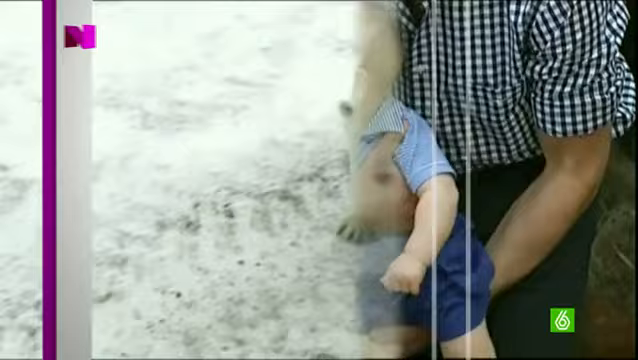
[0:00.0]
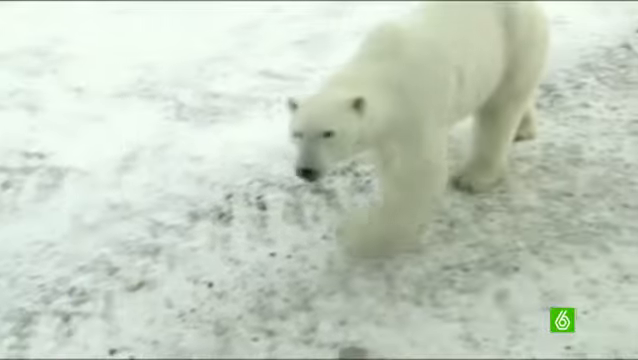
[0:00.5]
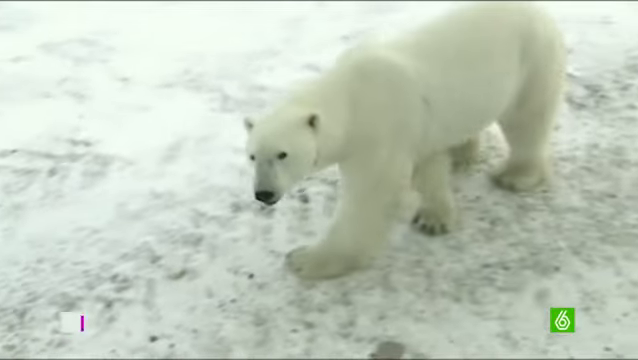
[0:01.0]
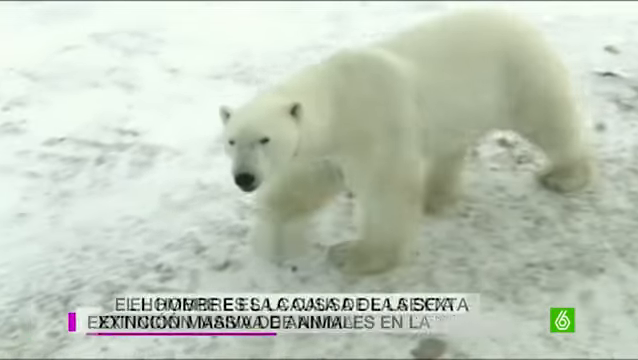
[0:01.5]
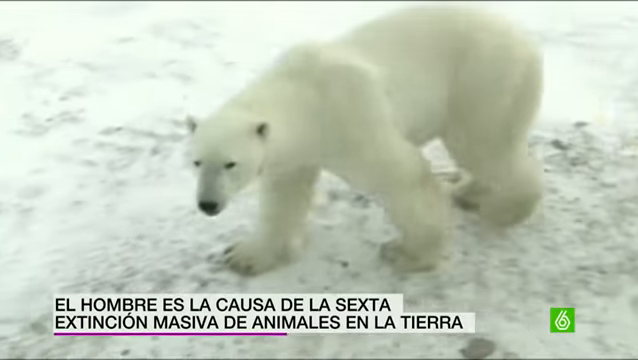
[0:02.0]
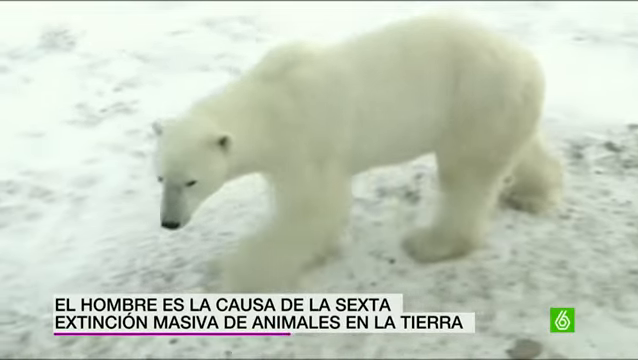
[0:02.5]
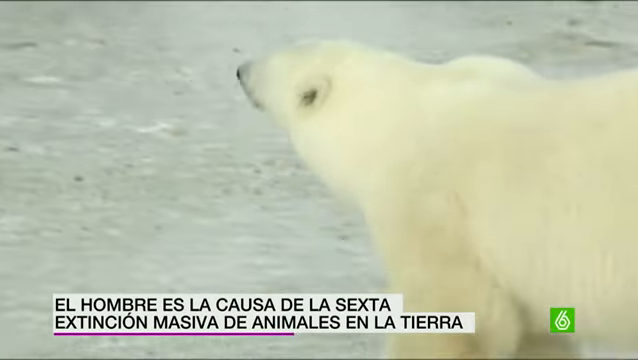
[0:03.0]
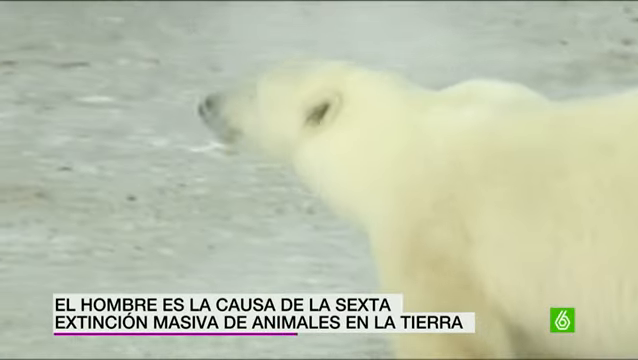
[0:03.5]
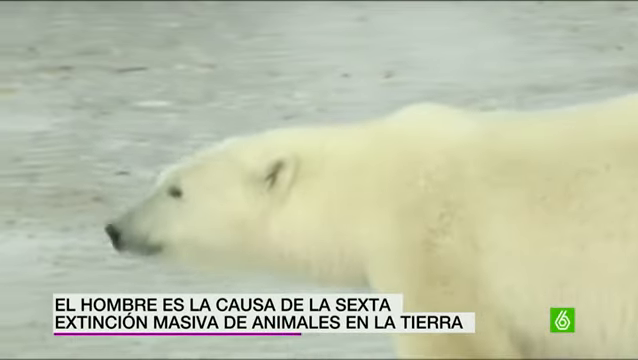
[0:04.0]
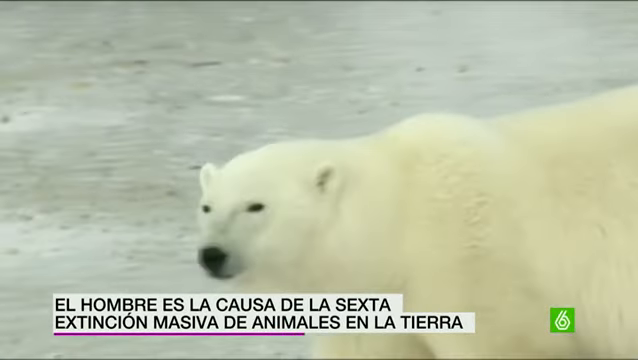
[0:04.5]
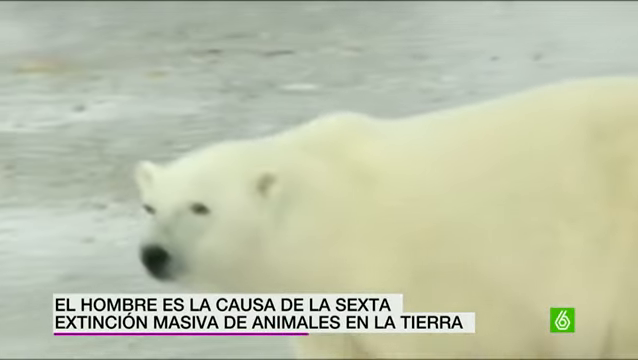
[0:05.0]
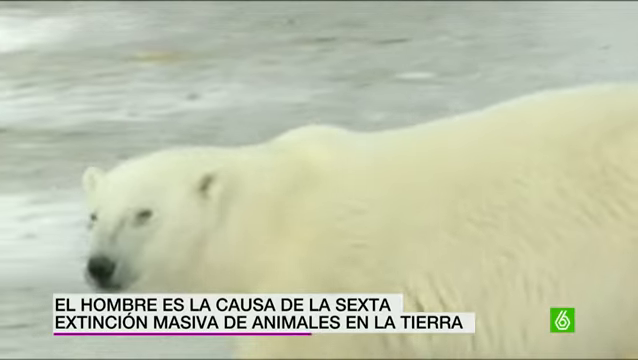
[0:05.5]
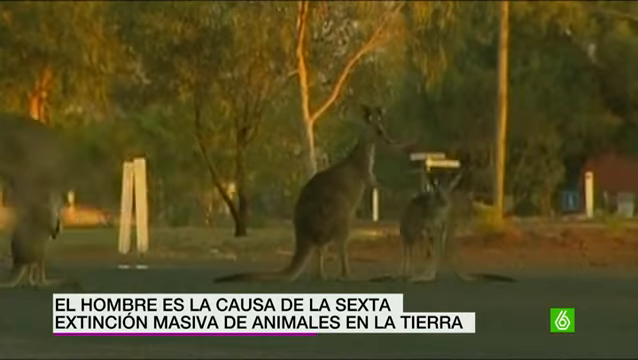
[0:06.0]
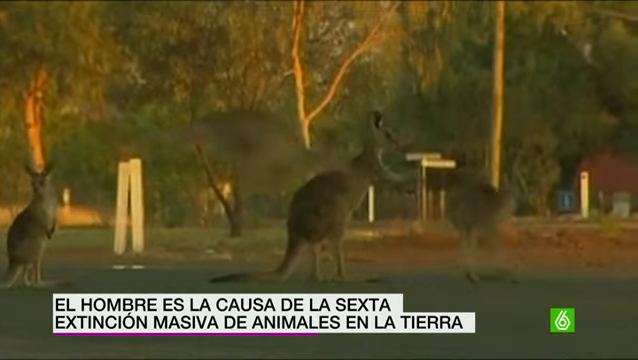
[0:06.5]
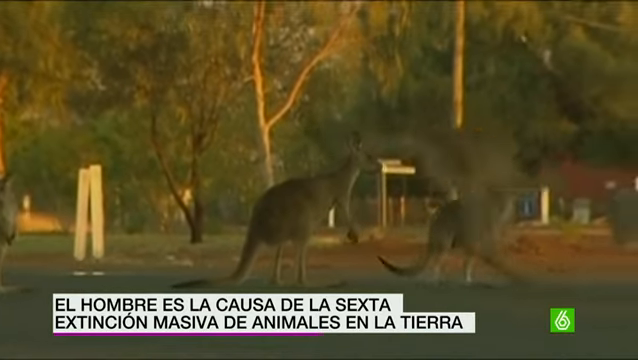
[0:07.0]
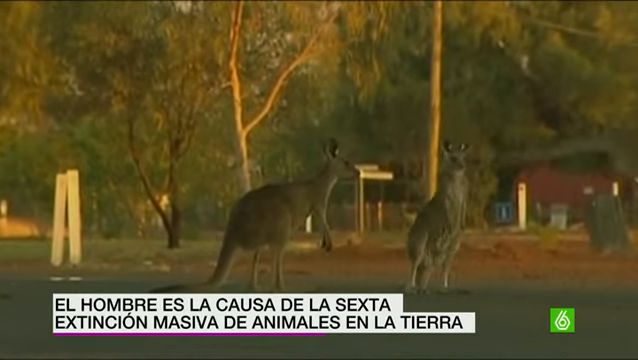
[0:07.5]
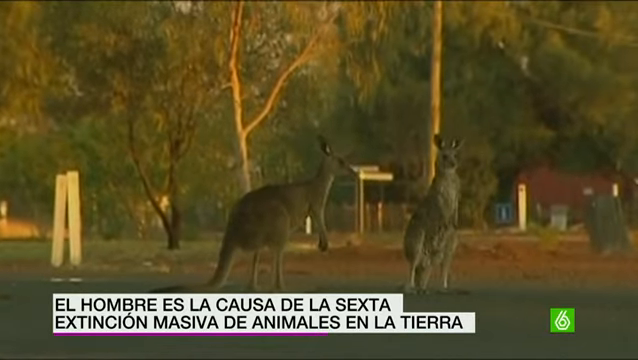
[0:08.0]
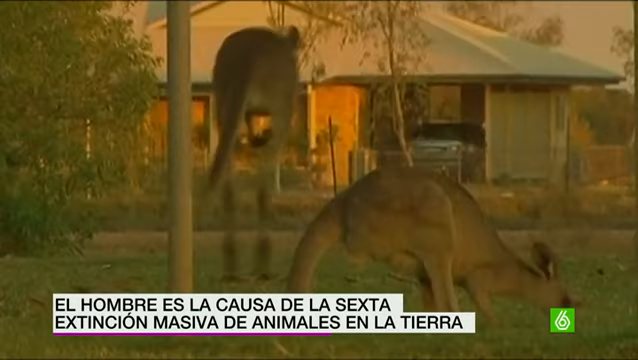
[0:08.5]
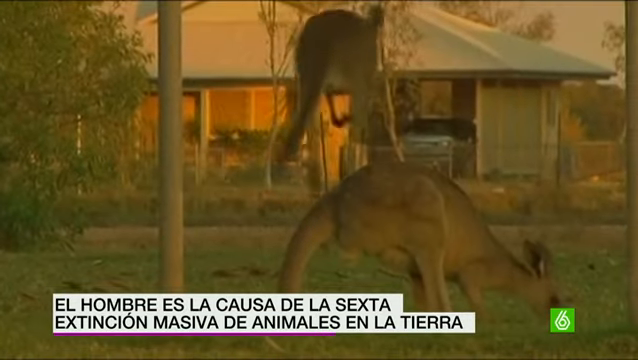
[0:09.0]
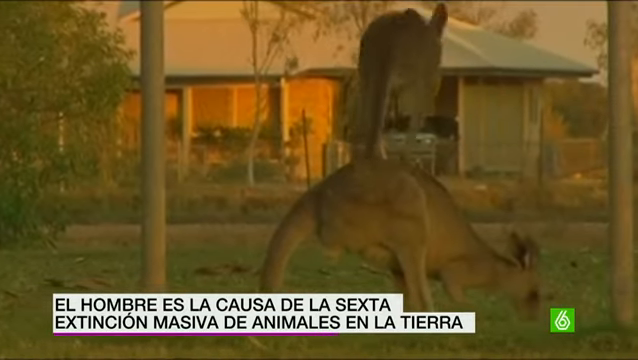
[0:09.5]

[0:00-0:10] There is a lot of snow, and it looks like it has been snowing. A polar bear walks in the snow, sniffing or looking around as if it is looking for something. The video then shows a place with a lot of trees that is not a forest, where there appear to be houses and a lot of kangaroos. There is also a household at the far end, which has a garage with a car inside.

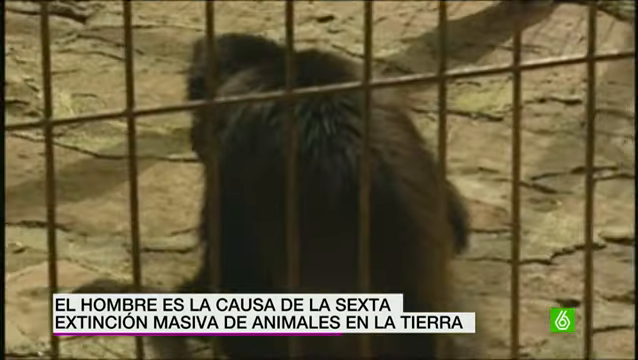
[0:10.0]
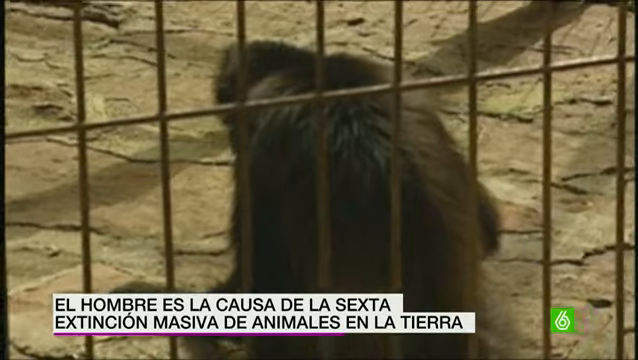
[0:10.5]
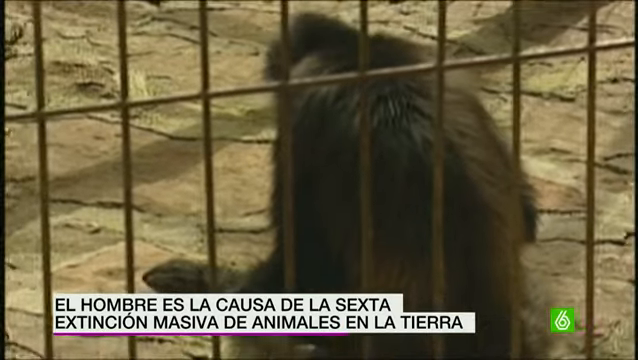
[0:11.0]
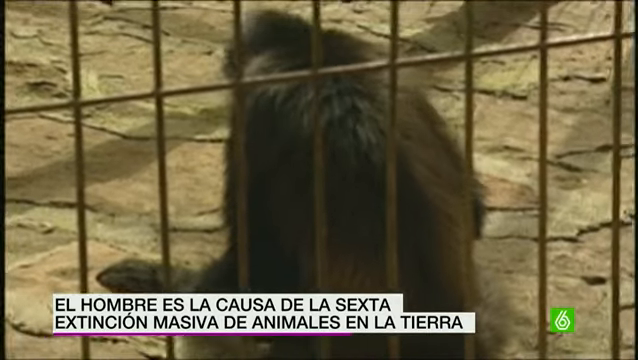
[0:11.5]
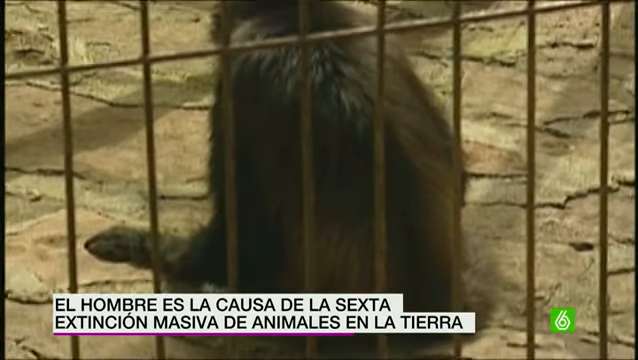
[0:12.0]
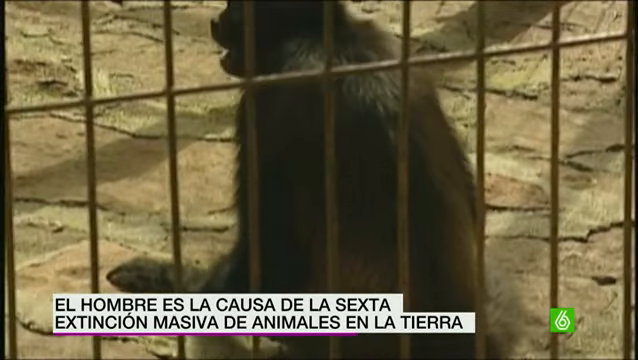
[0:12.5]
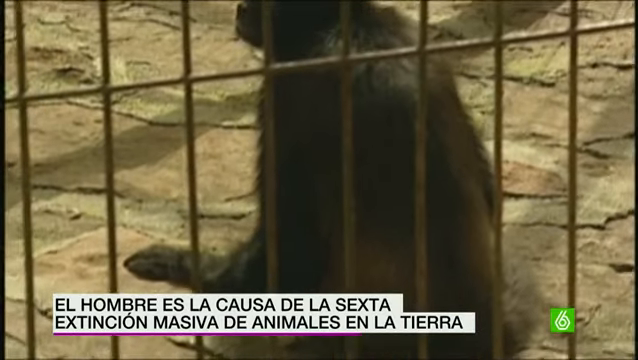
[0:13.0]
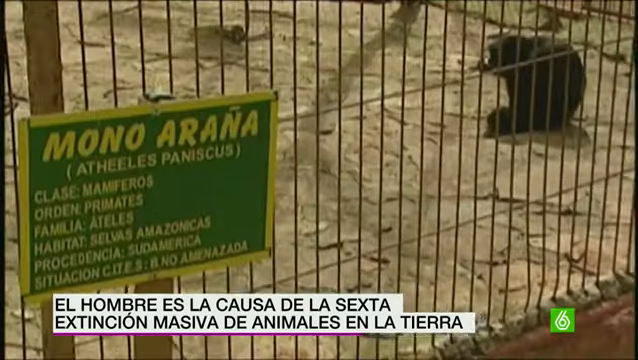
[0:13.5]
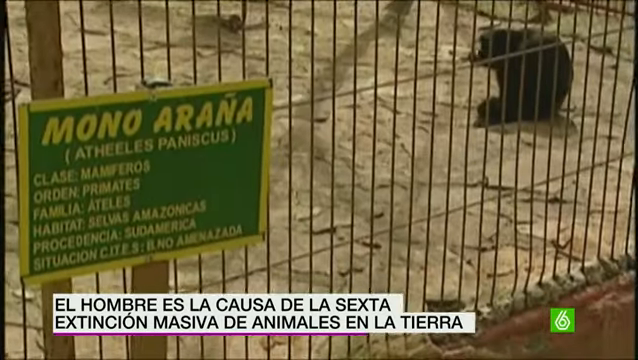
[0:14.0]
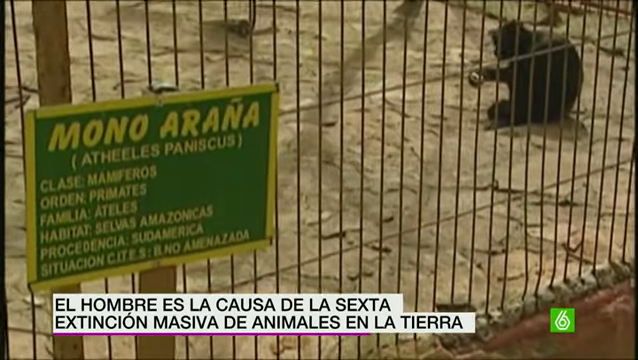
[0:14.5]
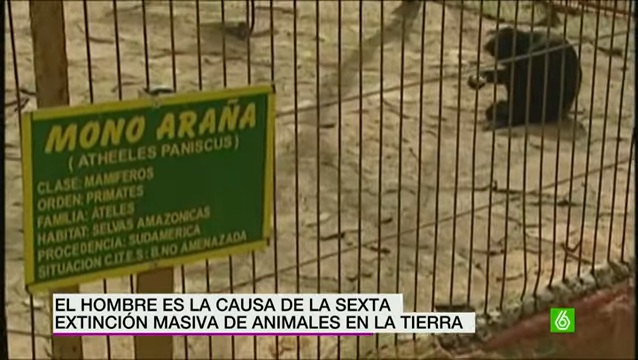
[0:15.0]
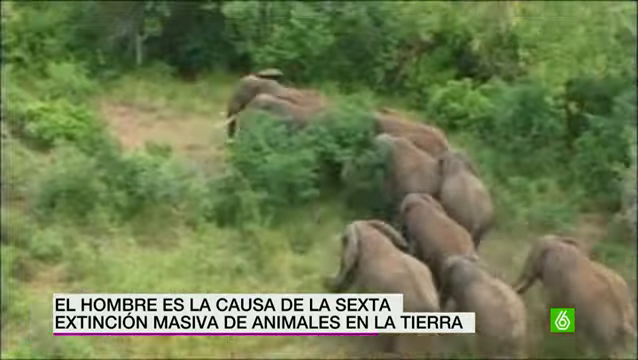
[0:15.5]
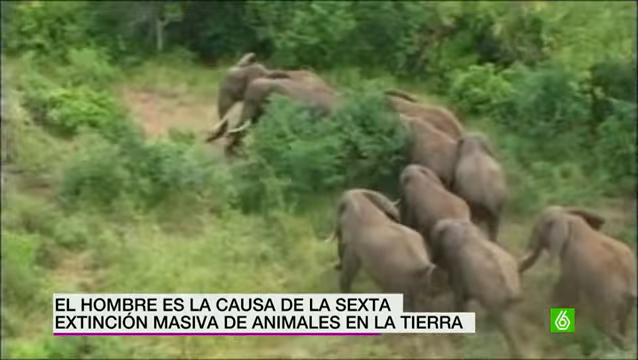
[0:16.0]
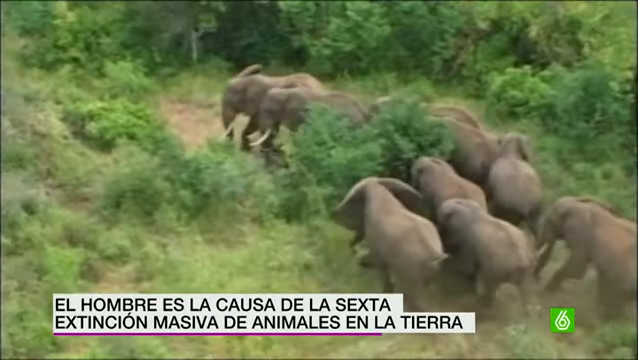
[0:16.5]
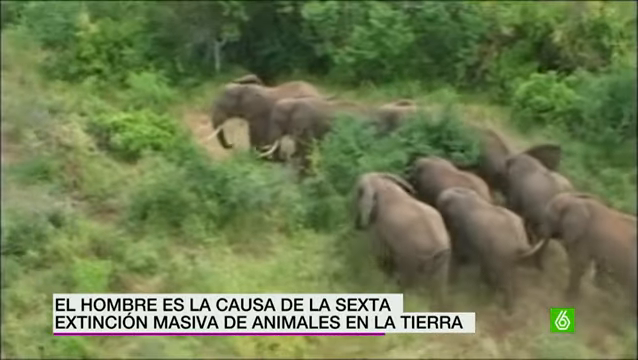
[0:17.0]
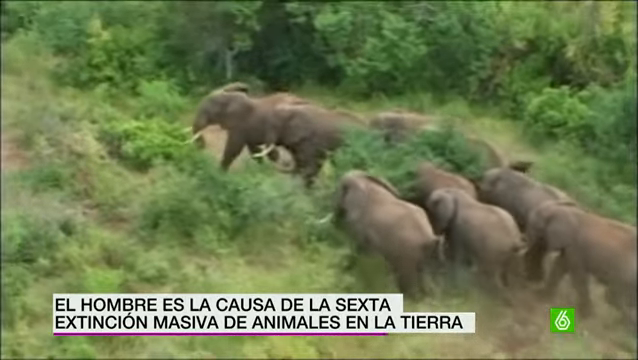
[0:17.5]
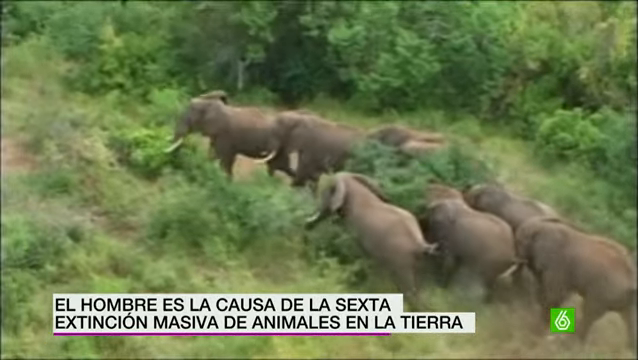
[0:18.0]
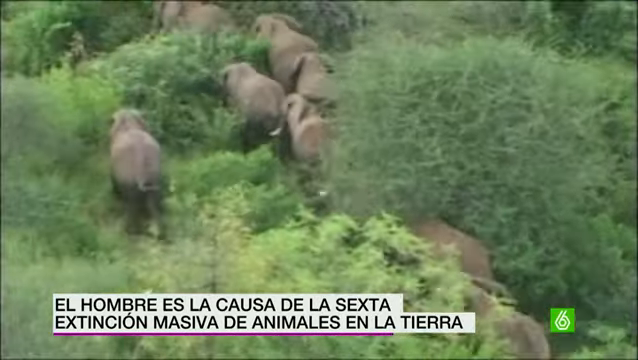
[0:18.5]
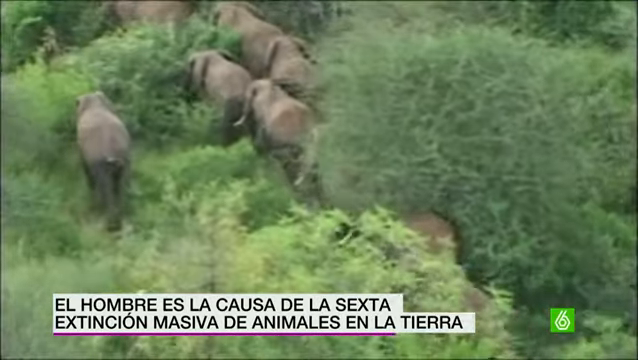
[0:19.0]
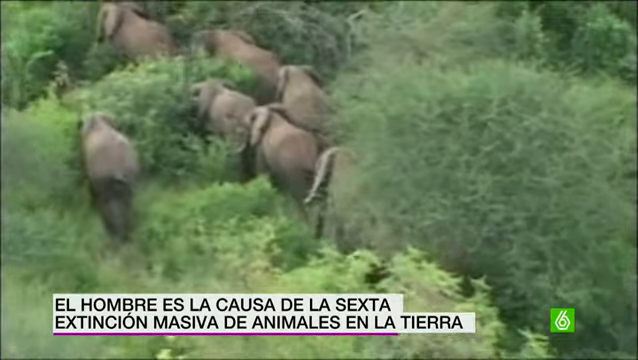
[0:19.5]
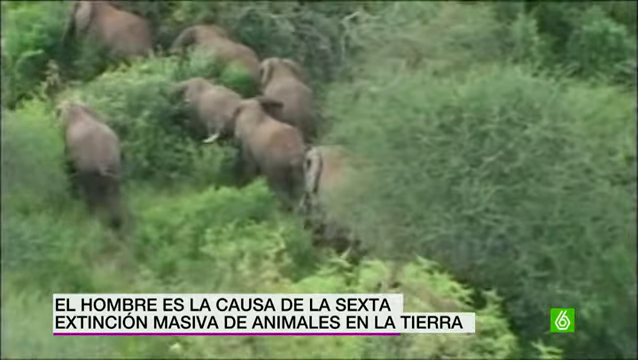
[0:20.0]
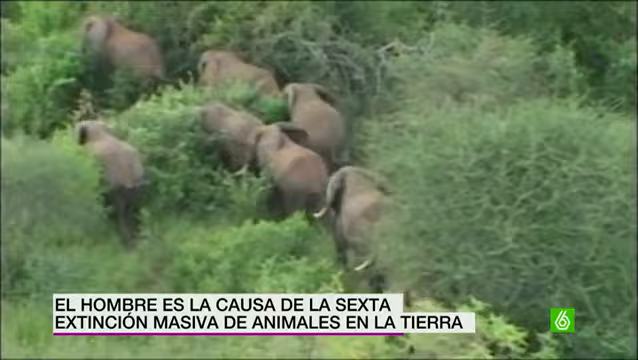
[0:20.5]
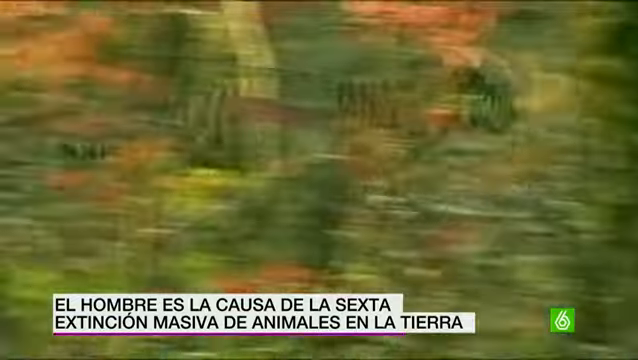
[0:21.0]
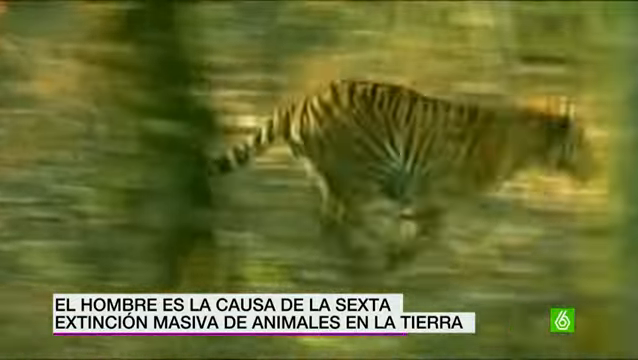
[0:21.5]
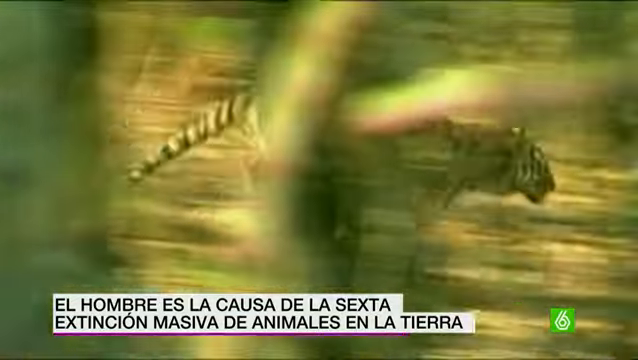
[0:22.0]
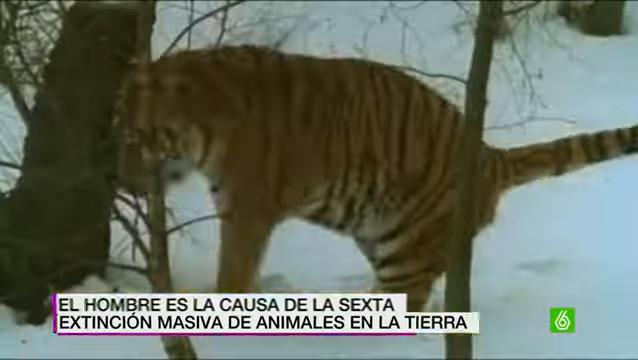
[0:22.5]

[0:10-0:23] An unidentified animal is in a cage, eating something. Its cage is labelled, and there are a lot of other labelled things. A forest with a lot of green trees appears, with a lot of elephants walking there, all going in the same direction. A tiger runs in a forest, apparently chasing something, and is then shown eating, possibly because it smells something.